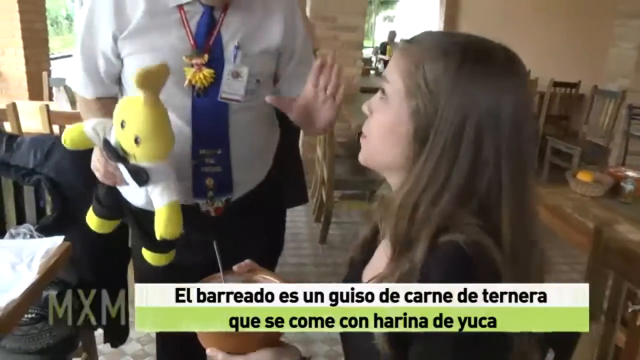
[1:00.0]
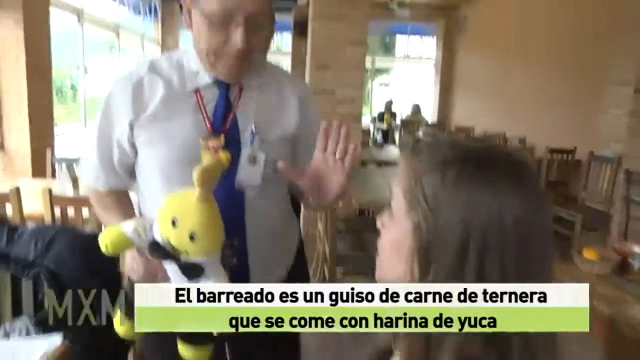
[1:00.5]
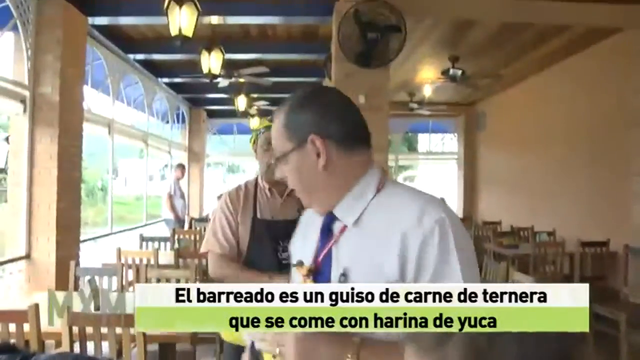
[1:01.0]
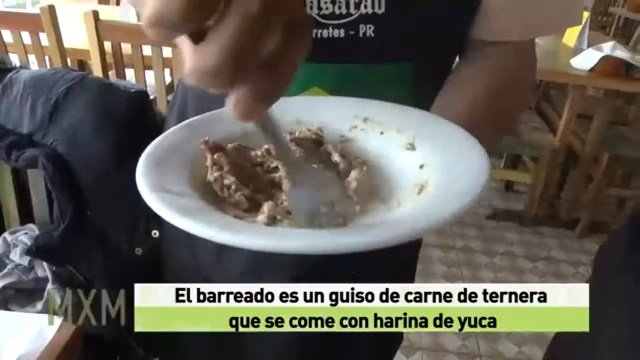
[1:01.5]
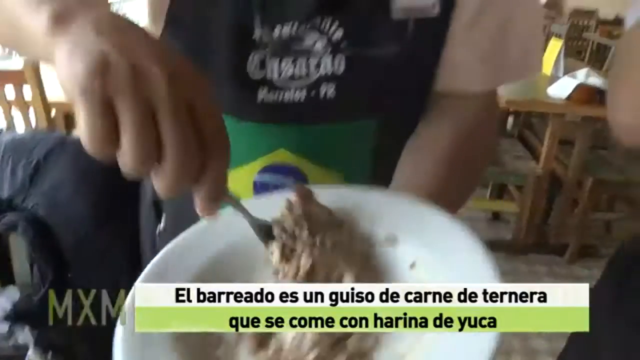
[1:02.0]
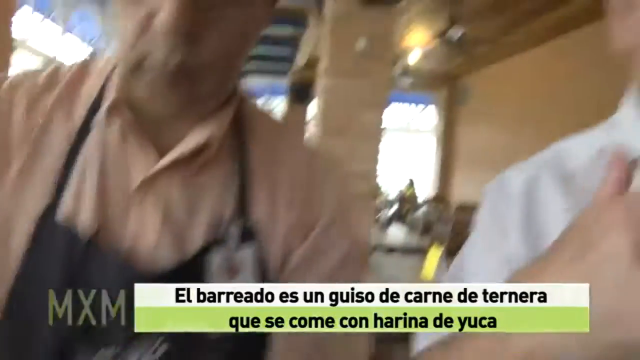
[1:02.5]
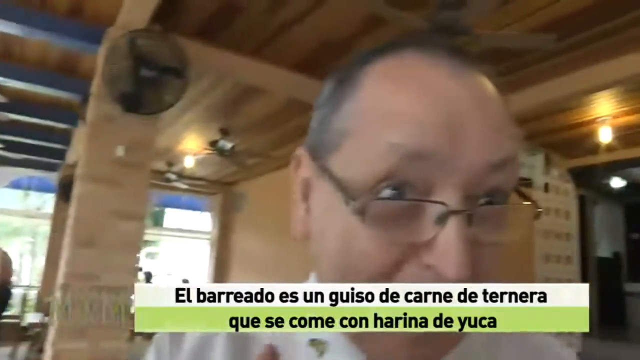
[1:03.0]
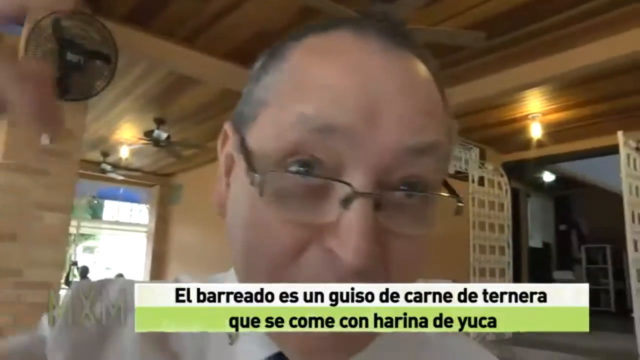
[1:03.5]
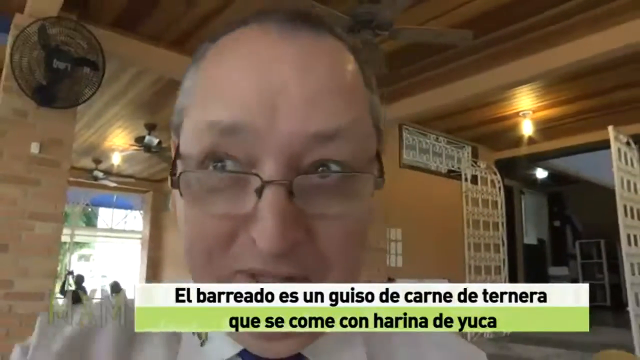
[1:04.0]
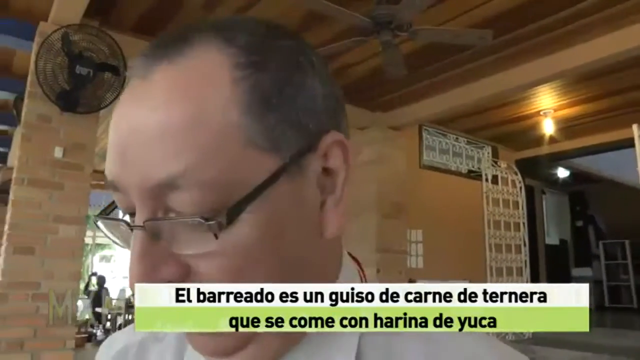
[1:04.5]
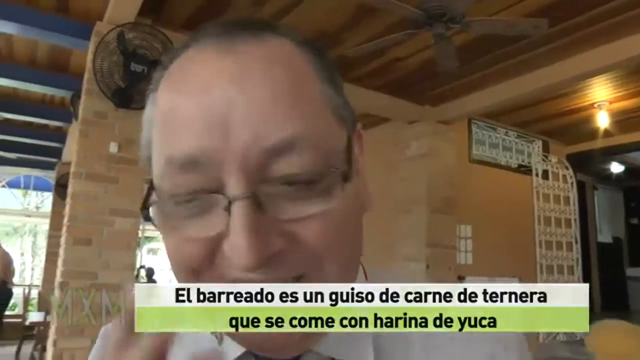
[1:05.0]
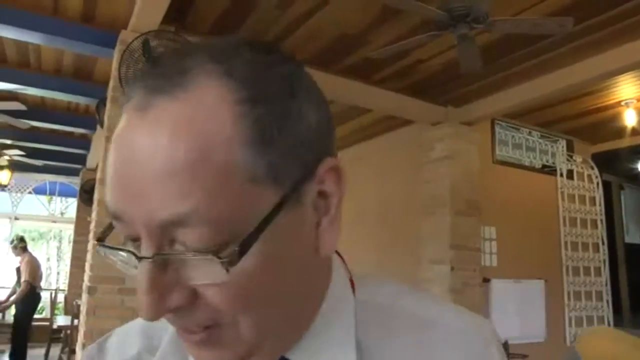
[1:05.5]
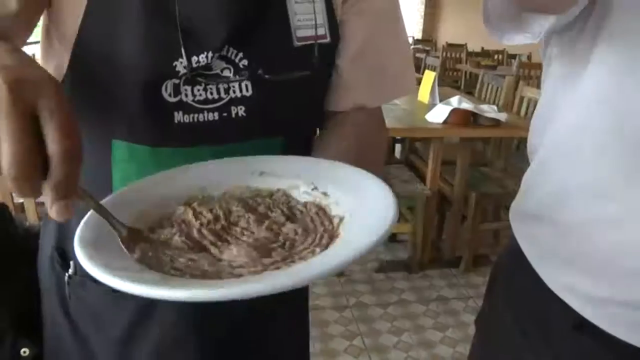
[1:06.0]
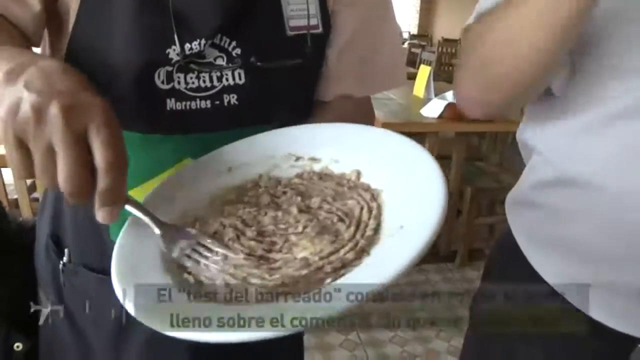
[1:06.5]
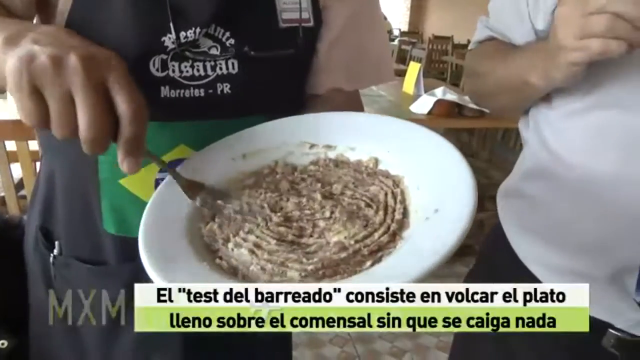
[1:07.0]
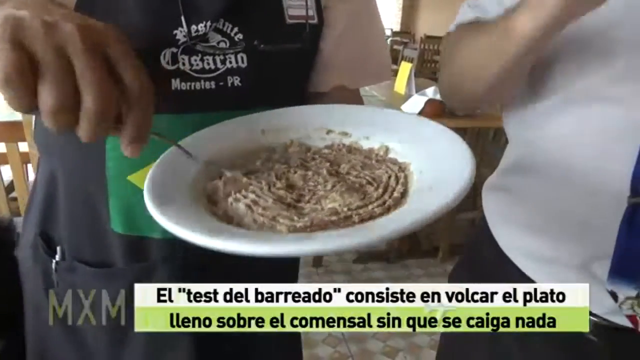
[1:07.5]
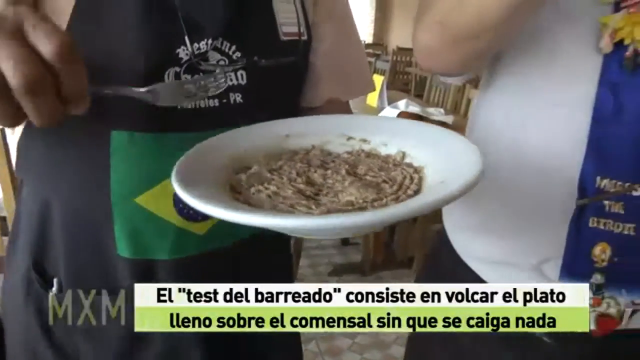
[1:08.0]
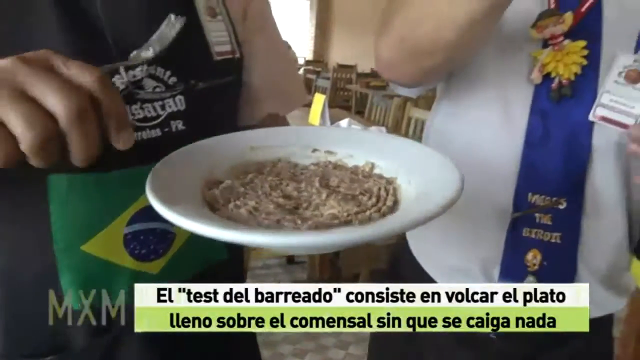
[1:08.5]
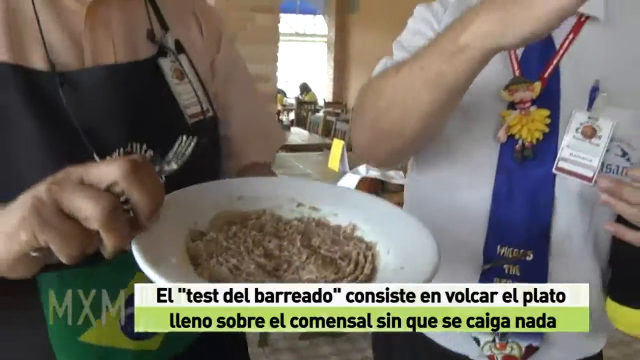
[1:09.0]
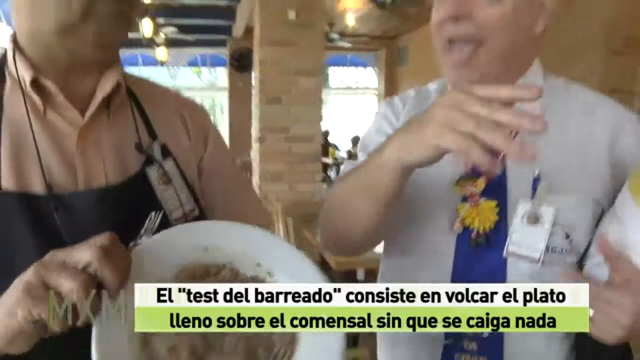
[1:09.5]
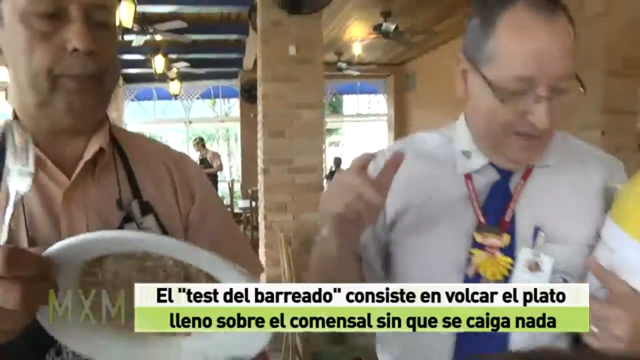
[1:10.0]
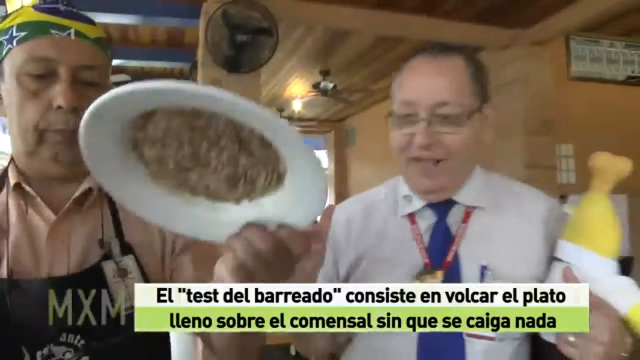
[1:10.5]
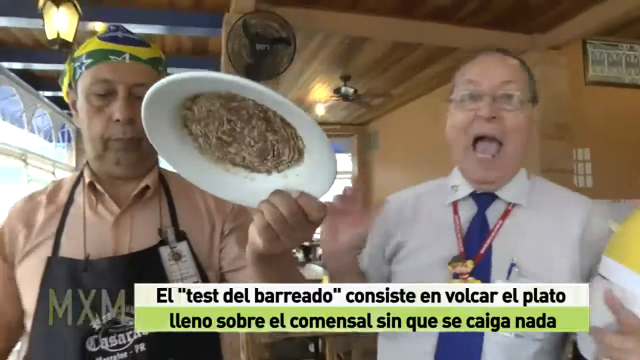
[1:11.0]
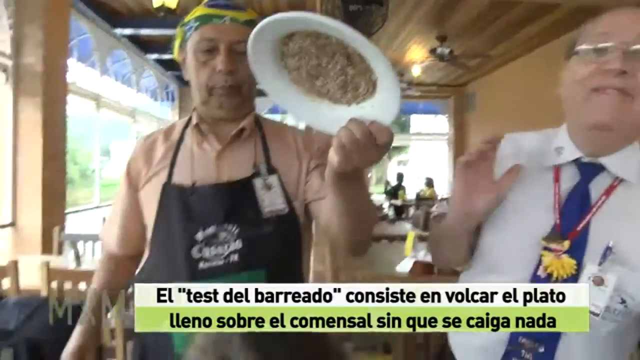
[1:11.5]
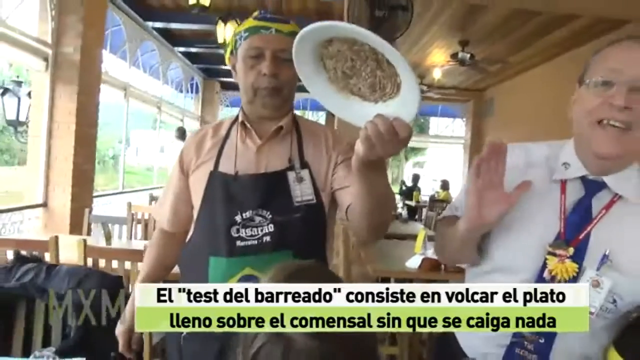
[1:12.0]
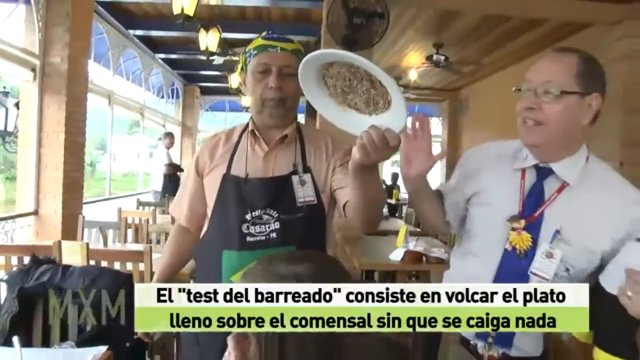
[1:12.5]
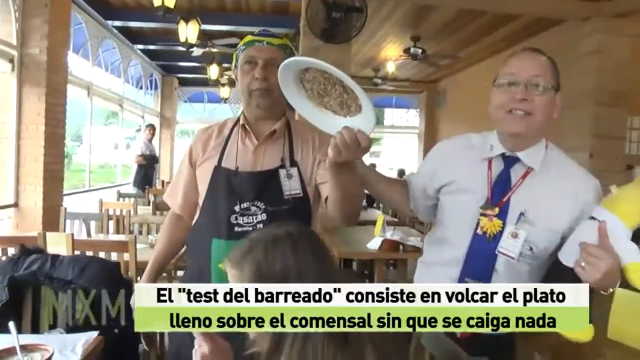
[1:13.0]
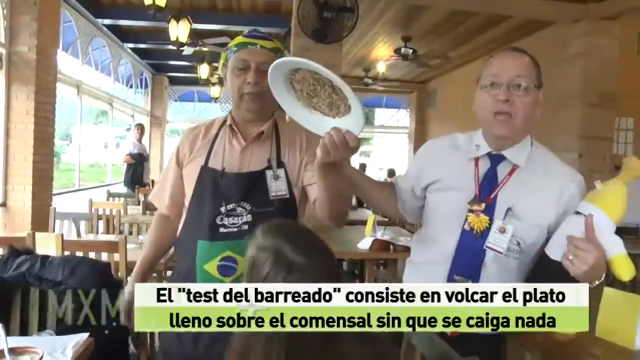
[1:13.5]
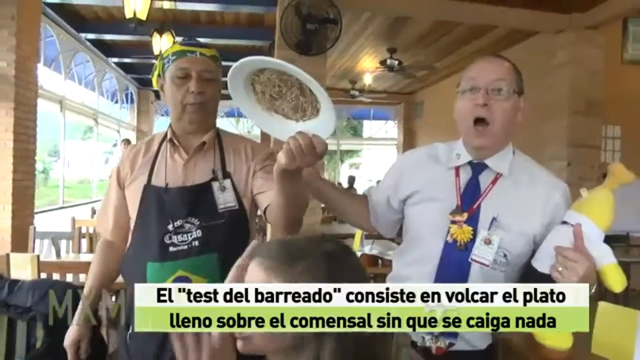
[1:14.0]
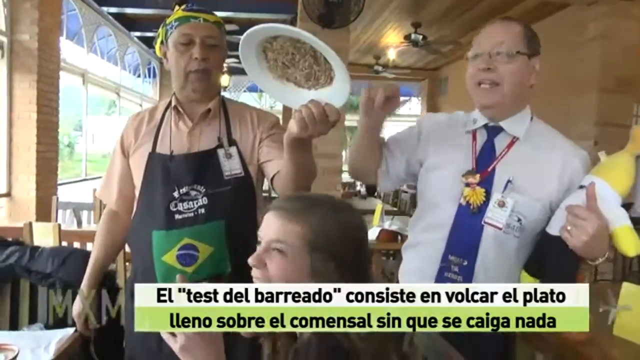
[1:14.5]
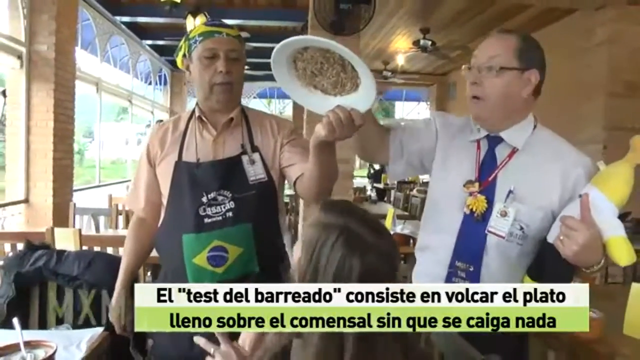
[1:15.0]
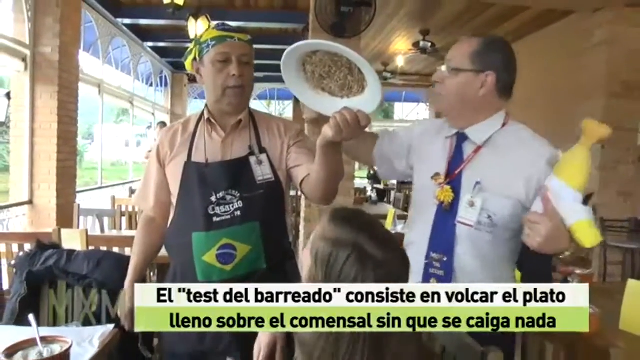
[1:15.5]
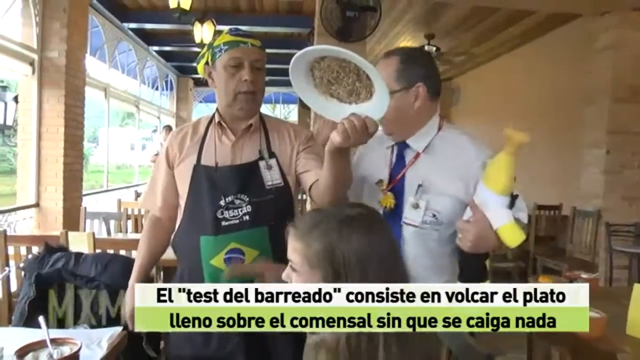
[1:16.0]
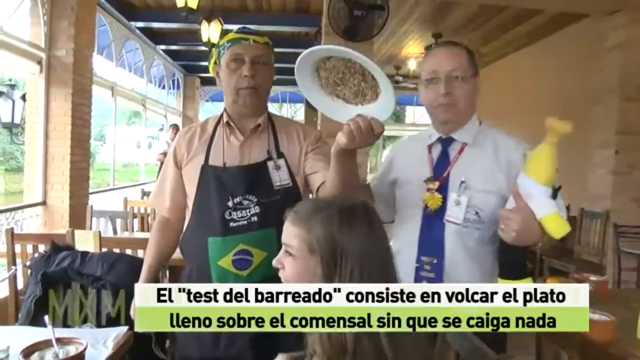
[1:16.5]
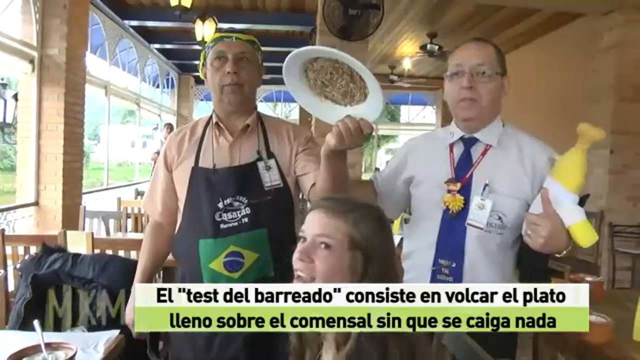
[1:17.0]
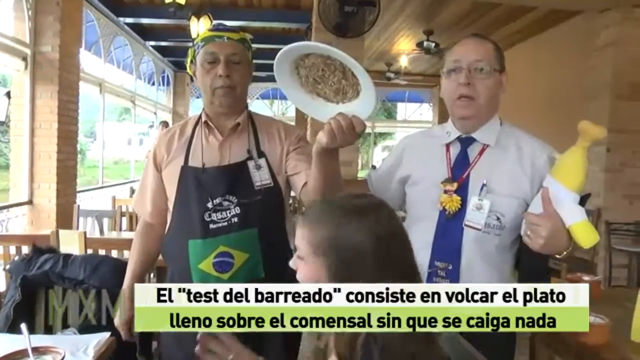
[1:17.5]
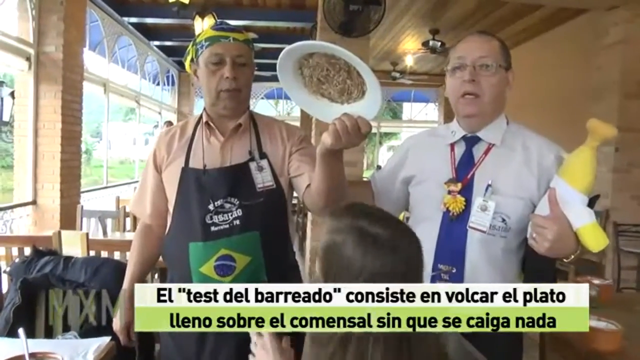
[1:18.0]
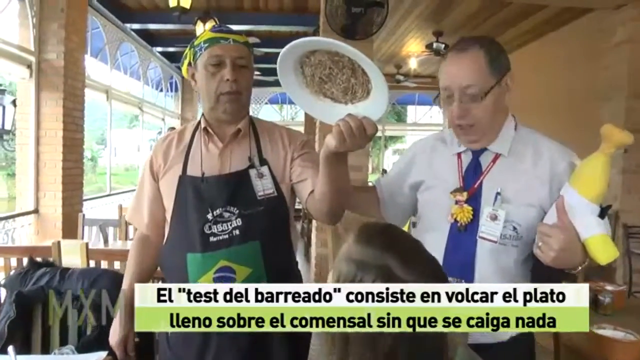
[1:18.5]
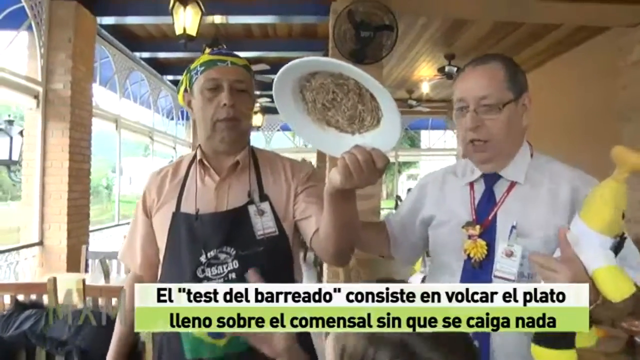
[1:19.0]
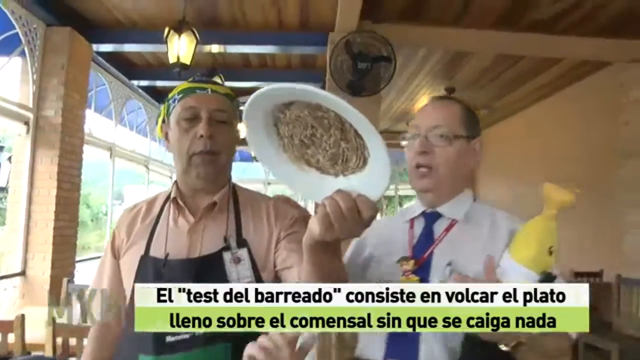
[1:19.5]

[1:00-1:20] As he hands the dish over, the man talks to the people he is serving. Another dish is brought, and he stirs it around with a fork; it sticks to the plate. When the plate is tilted, the food does not fall off. It is not very flexible and stays in the shape it was molded into by the silverware. She seems to be shocked, and the man looks like he is smiling or laughing about it.